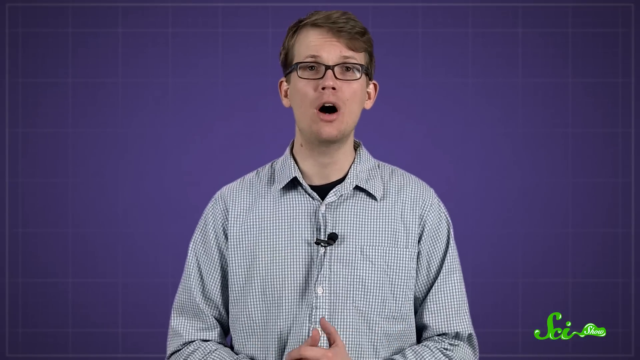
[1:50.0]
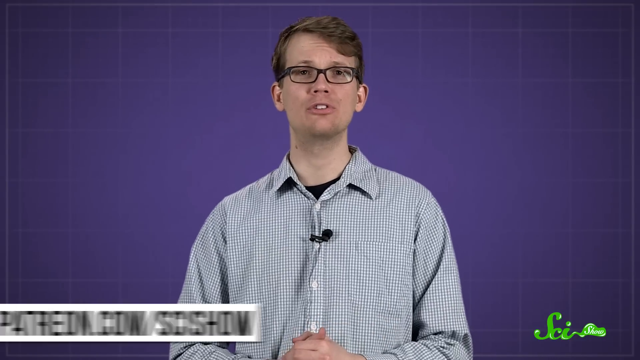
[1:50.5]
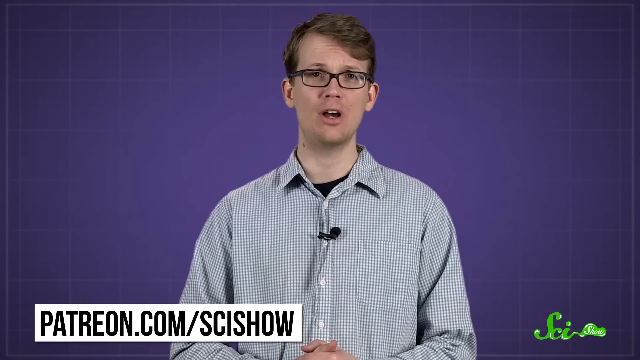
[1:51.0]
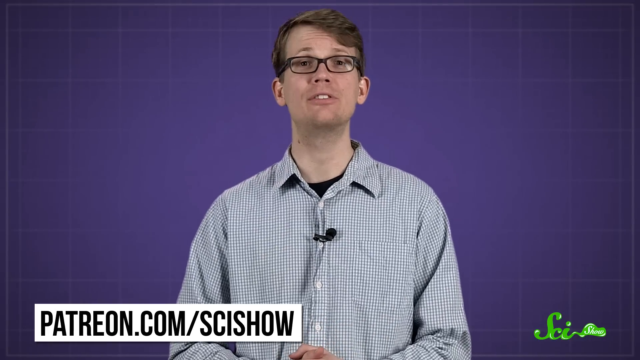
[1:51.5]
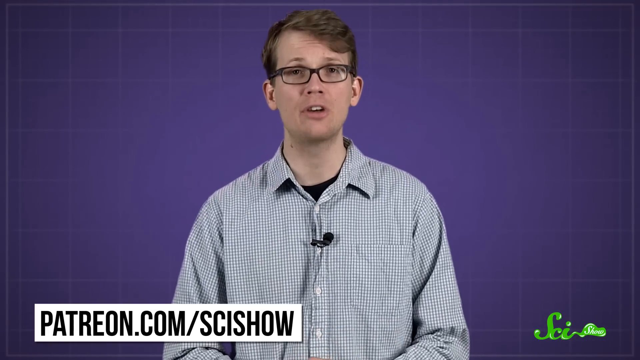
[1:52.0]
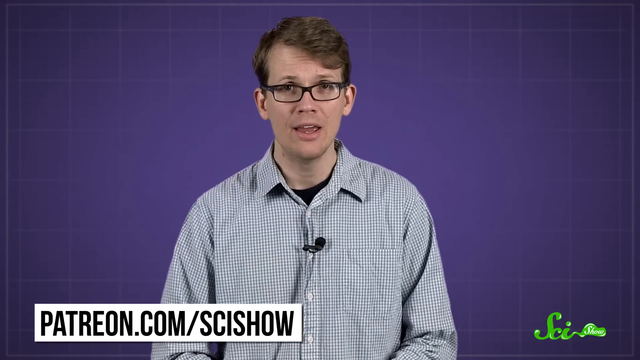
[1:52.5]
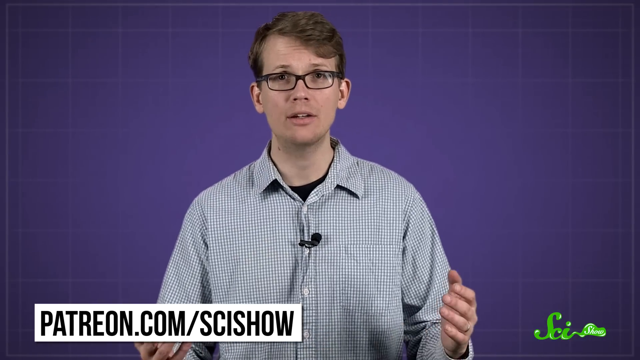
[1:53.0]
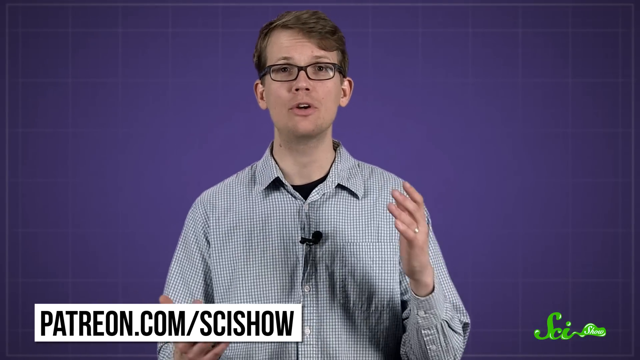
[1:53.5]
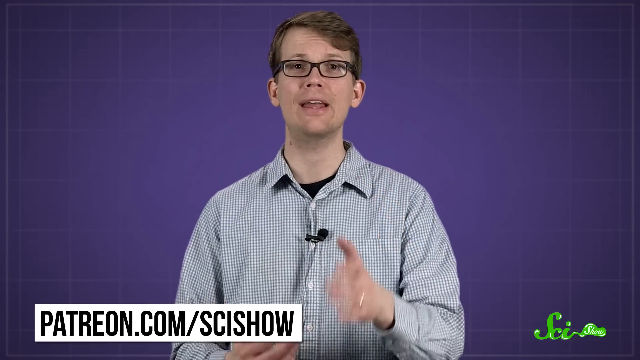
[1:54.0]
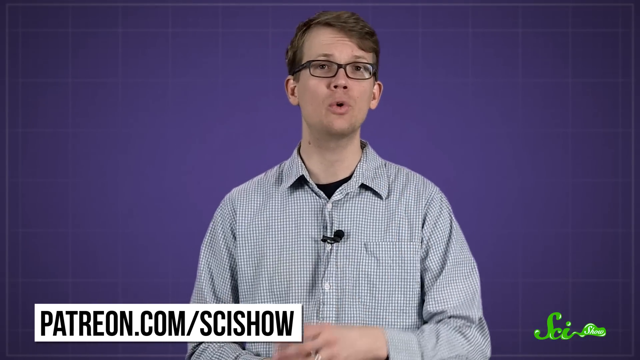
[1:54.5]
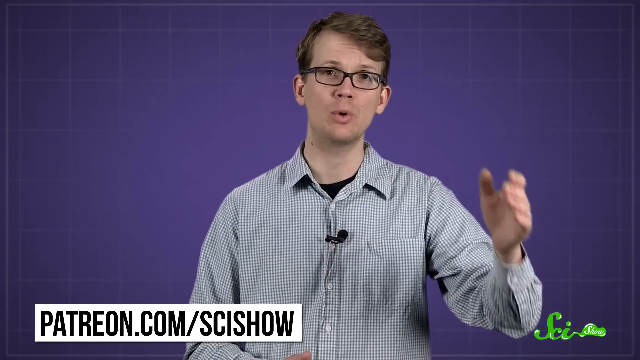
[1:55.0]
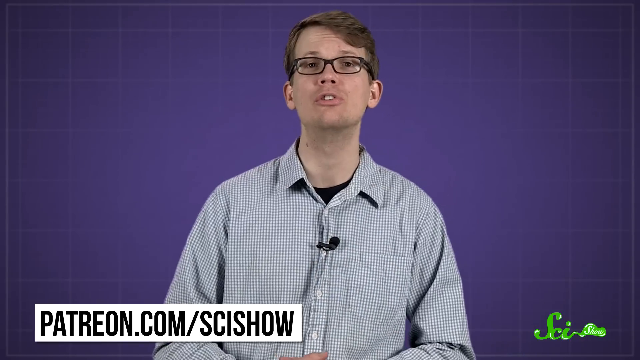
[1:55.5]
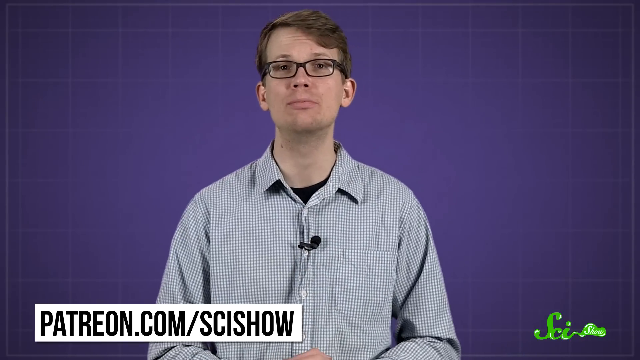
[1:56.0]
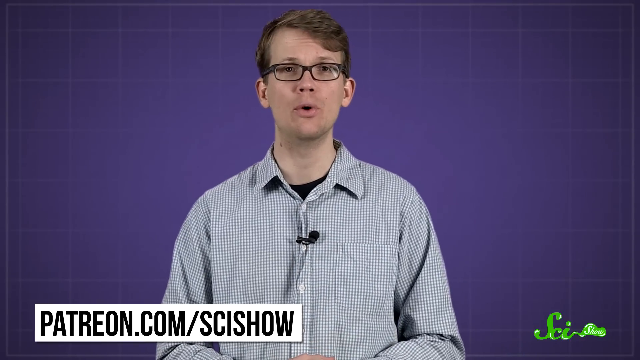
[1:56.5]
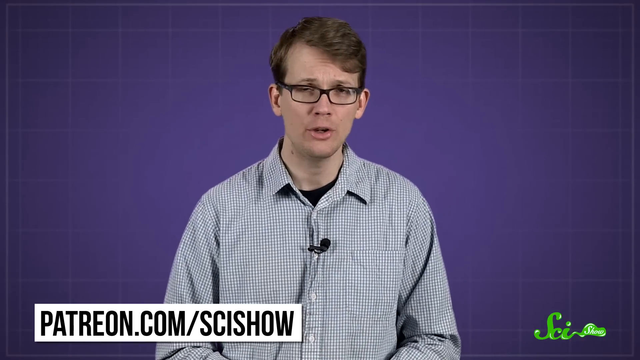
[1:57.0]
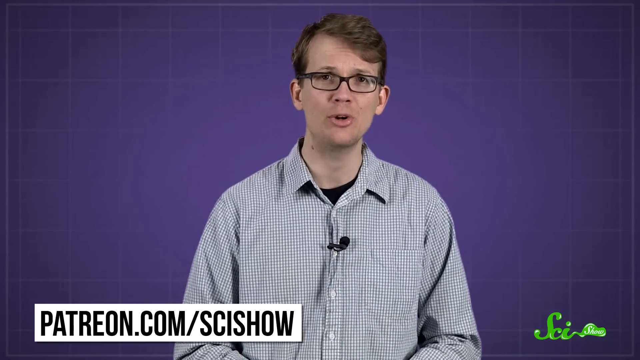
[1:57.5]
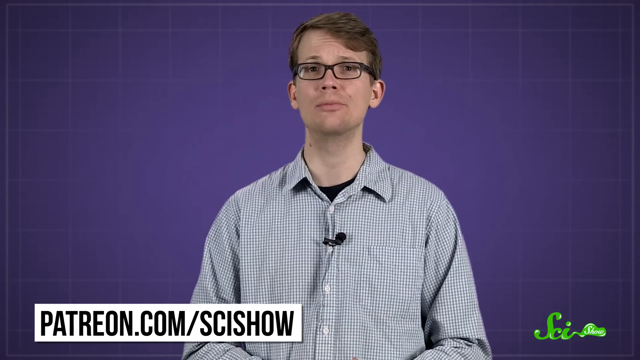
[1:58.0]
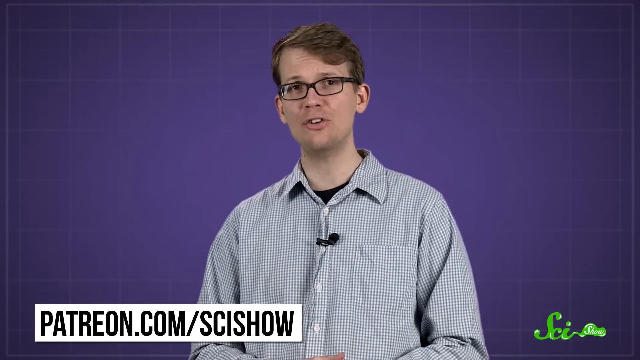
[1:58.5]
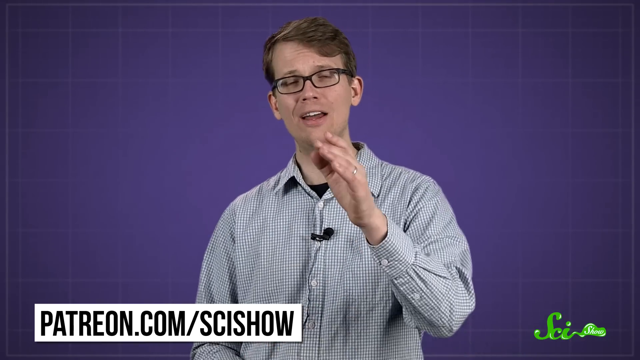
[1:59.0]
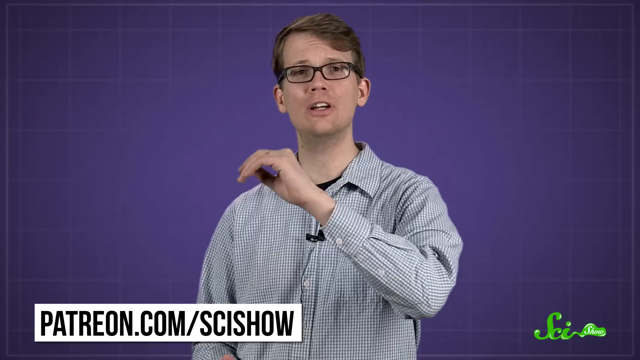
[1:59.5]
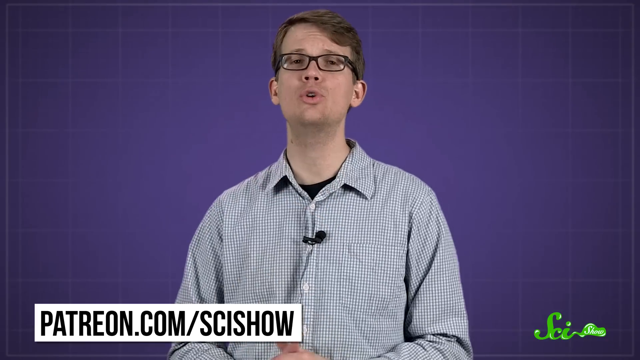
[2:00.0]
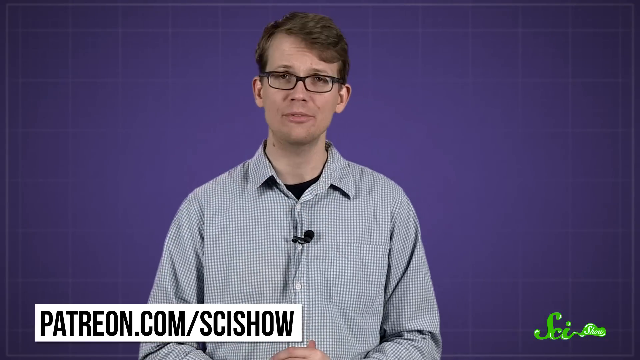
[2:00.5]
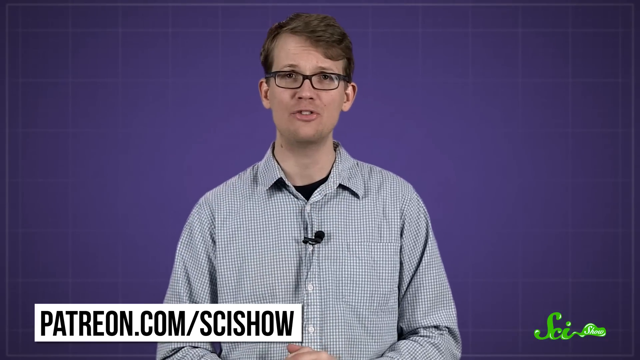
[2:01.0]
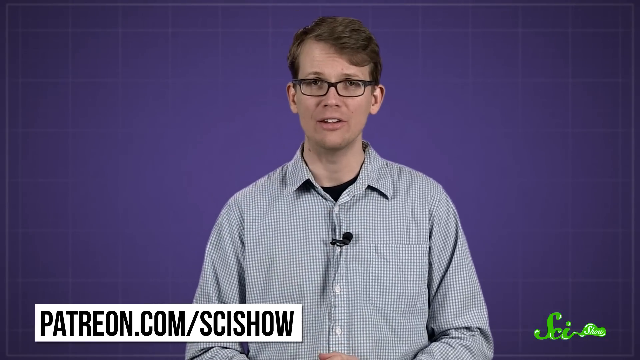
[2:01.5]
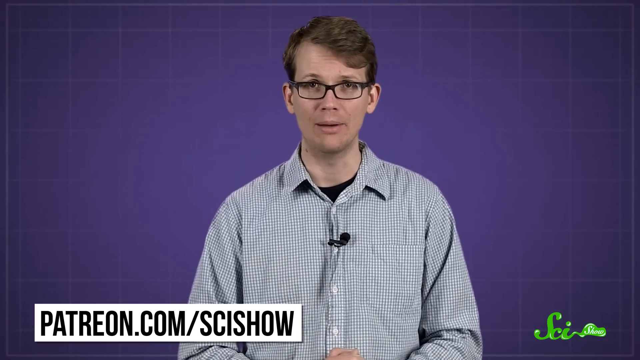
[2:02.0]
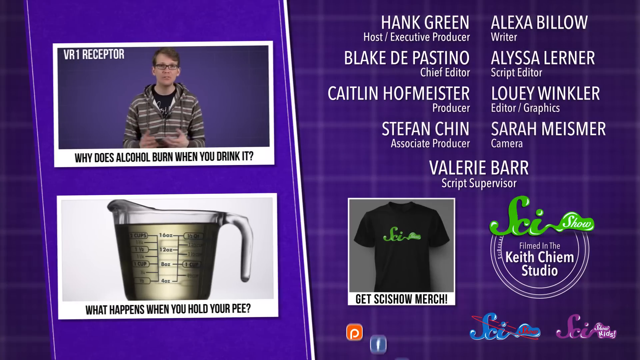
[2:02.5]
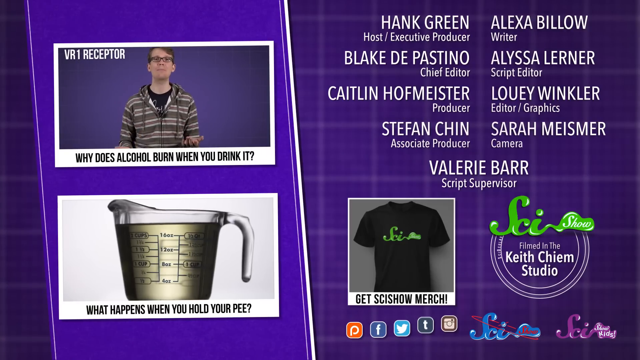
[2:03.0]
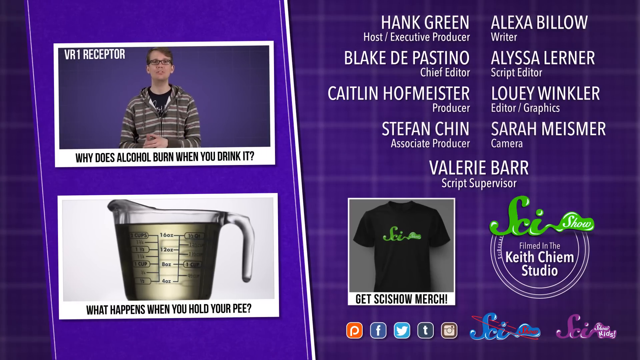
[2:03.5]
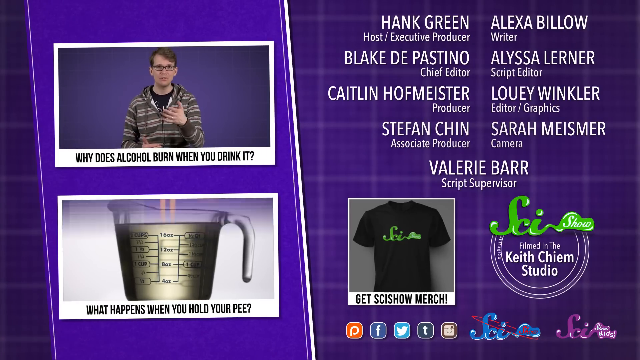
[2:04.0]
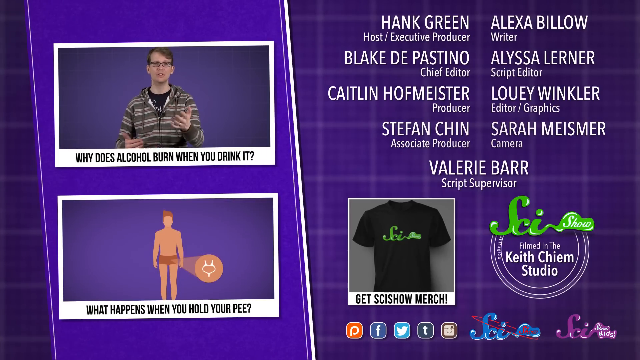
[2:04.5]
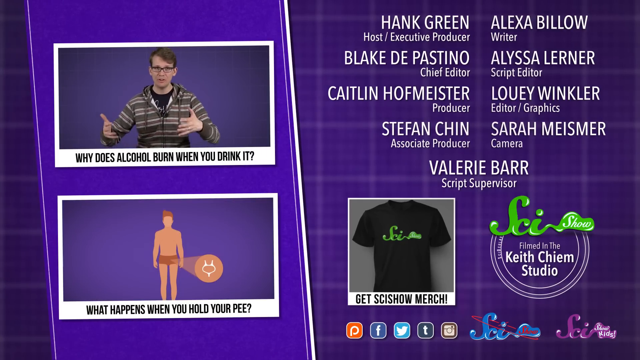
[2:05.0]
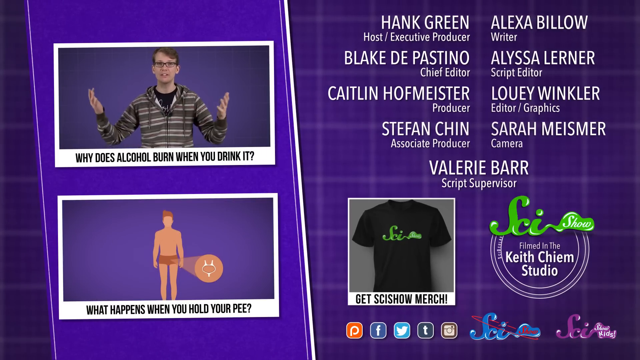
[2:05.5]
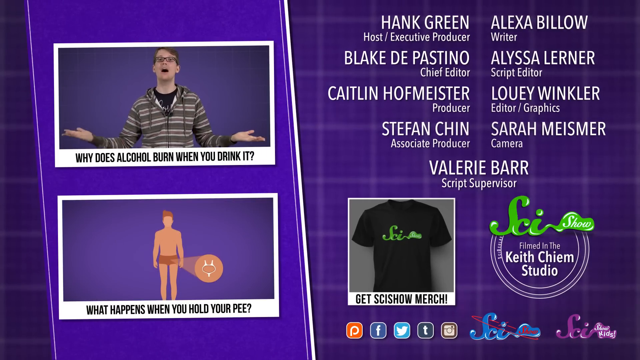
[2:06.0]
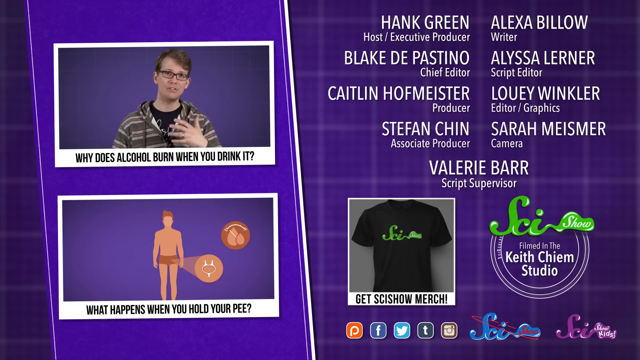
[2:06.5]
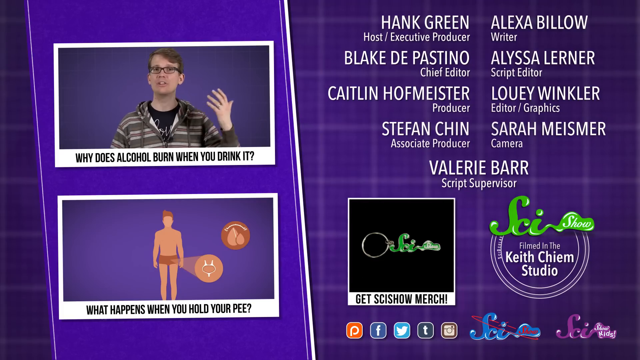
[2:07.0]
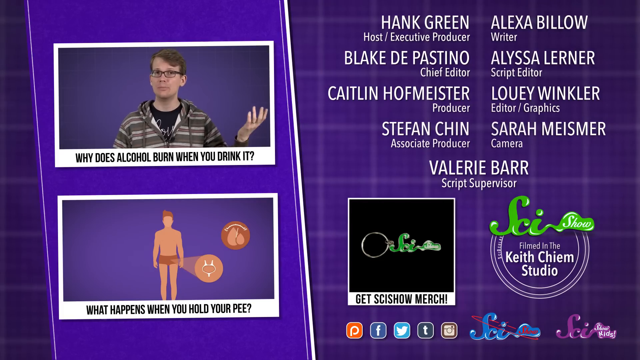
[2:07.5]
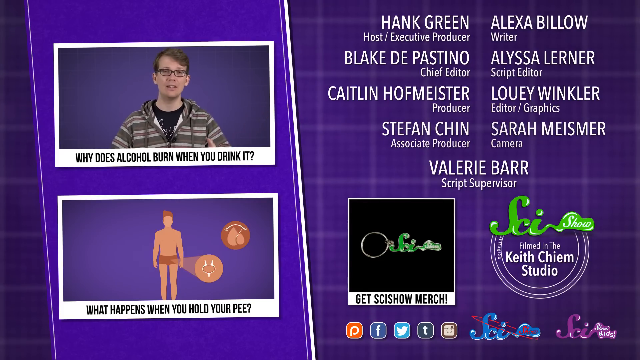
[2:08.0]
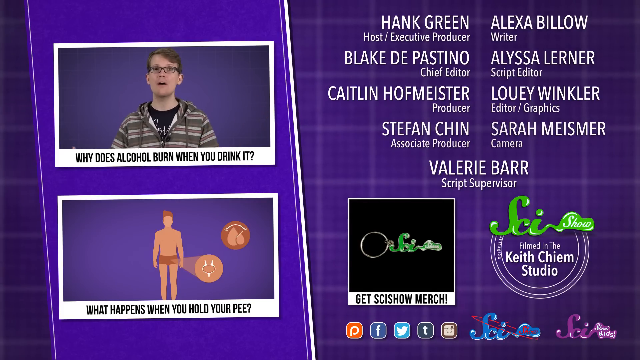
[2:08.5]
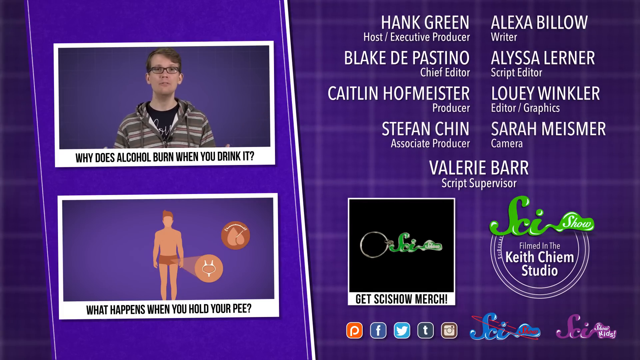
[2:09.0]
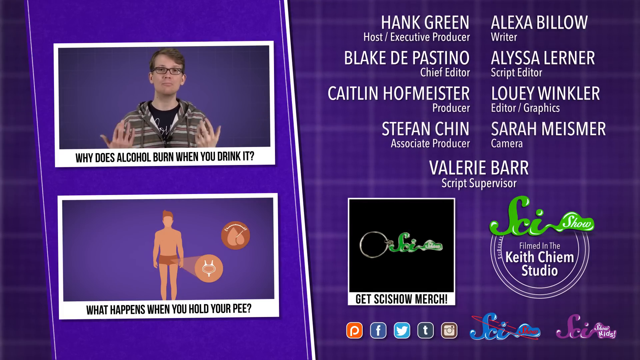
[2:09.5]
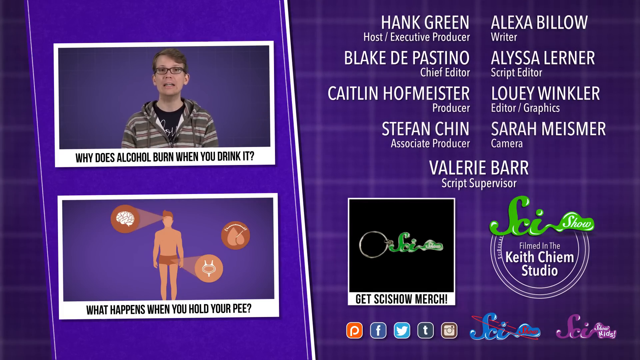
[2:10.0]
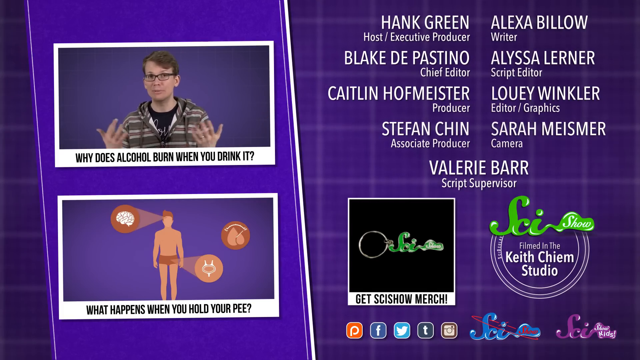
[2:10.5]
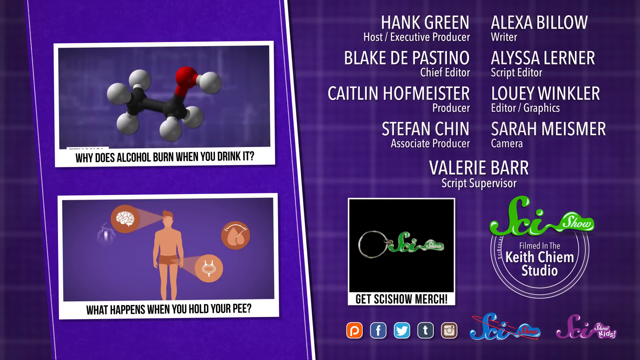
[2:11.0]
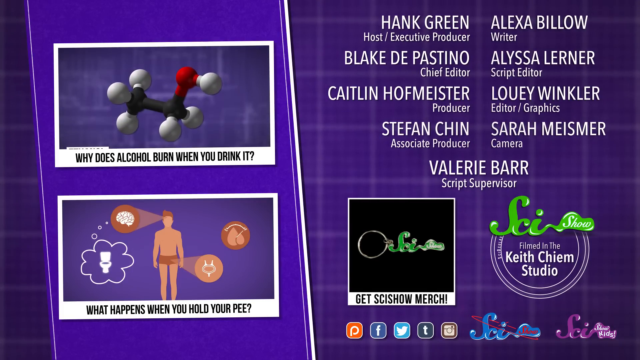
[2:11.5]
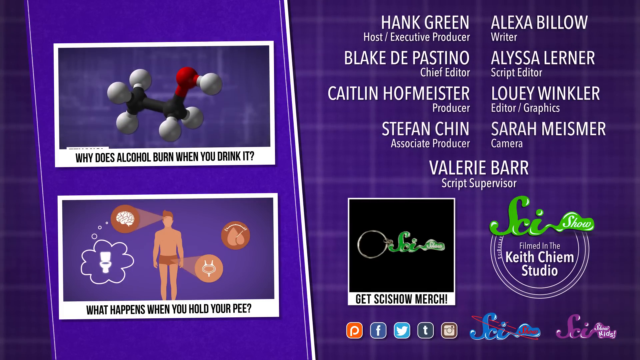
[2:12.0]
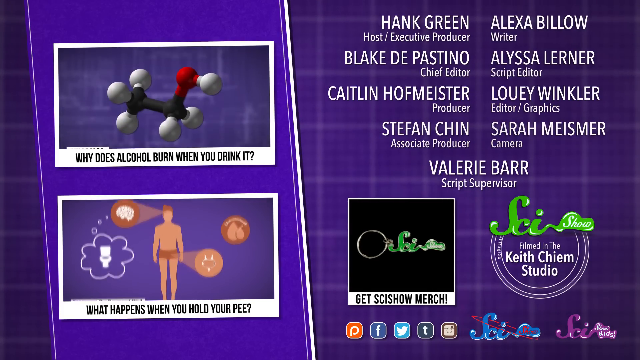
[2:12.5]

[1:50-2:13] Text on the bottom half of the screen, where the same man is speaking, says "patreon.com Scishow". He talks directly at the camera and at moments points directly at it. Credits then appear: host and executive producer Hank Green, chief editor Blake DePastino, producer Caitlyn Hofmeister, associate producer Daphne Chen, script supervisor Valerie bars, writer Alex below, script editor Alexa Lerner, editor and graphics Louie Winkler, and camera woman Sarah. Two smaller videos then appear, titled "why does alcohol burn when you drink it" and "what happens when you hold your pee". Text indicates it was filmed in the Keith Cheyenne studio. A black t-shirt with their emblem and logo is also shown.